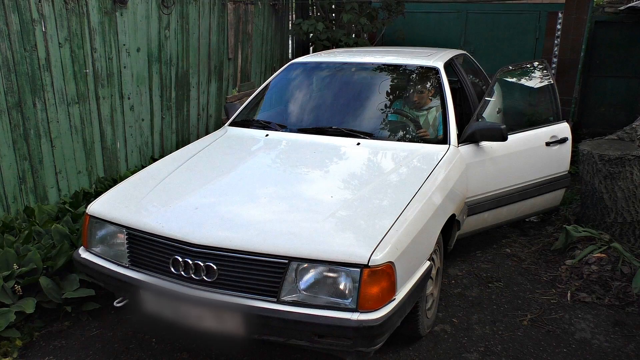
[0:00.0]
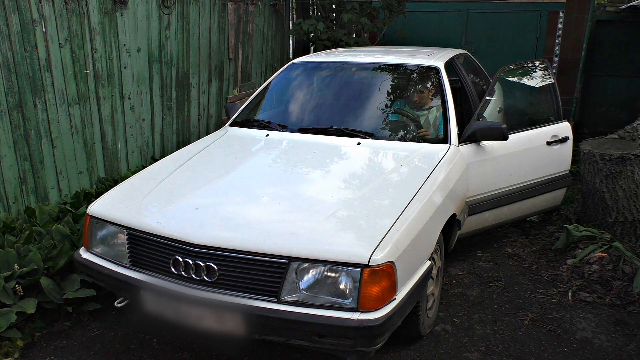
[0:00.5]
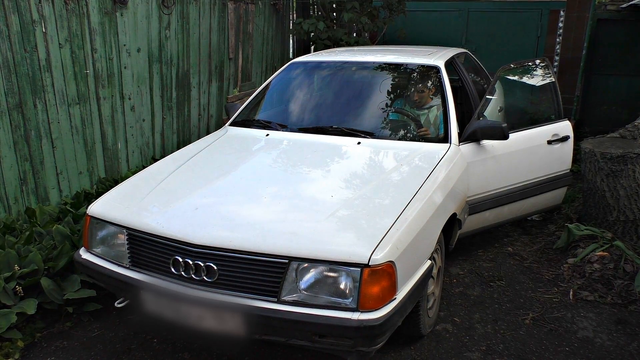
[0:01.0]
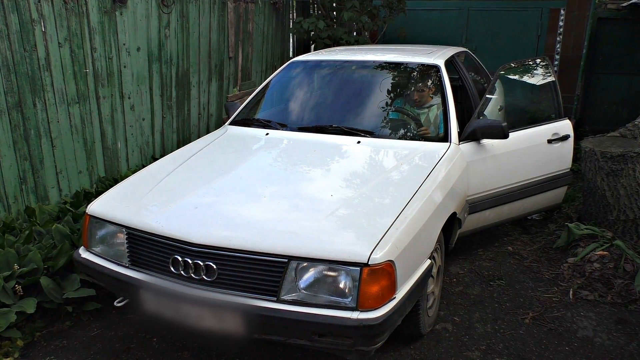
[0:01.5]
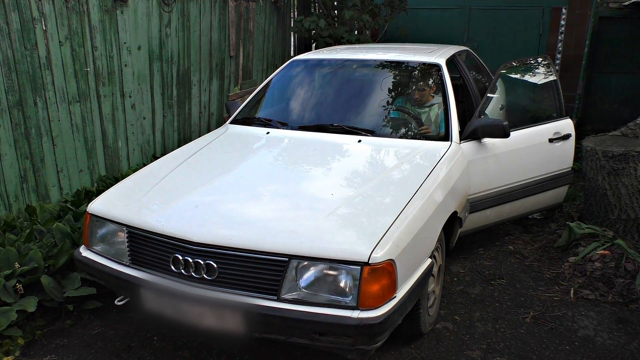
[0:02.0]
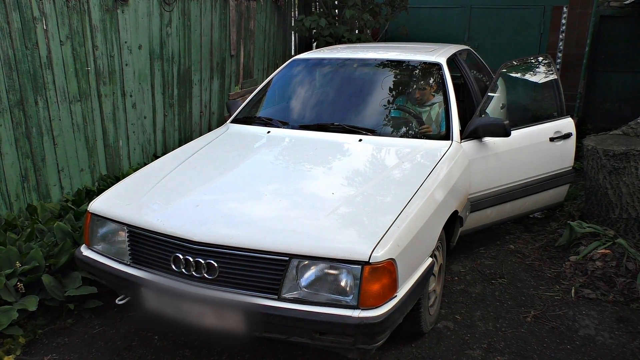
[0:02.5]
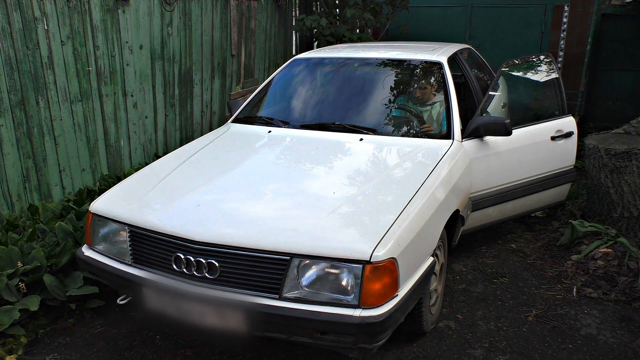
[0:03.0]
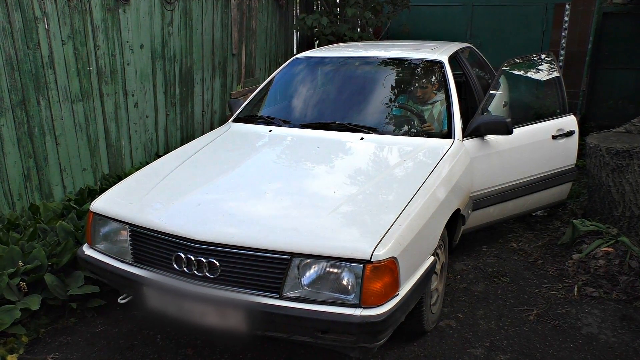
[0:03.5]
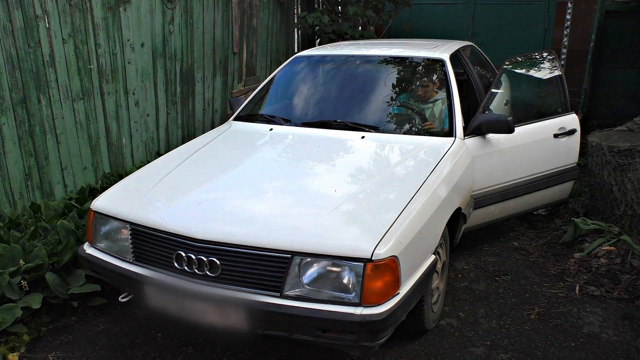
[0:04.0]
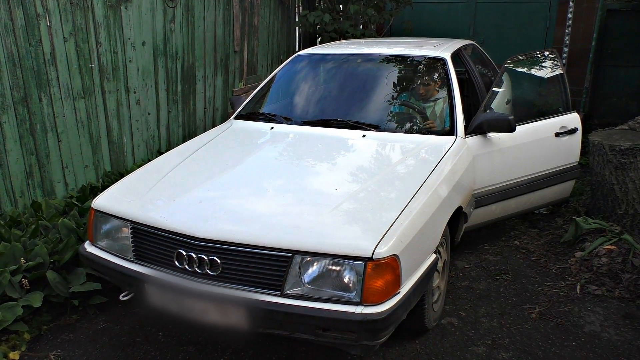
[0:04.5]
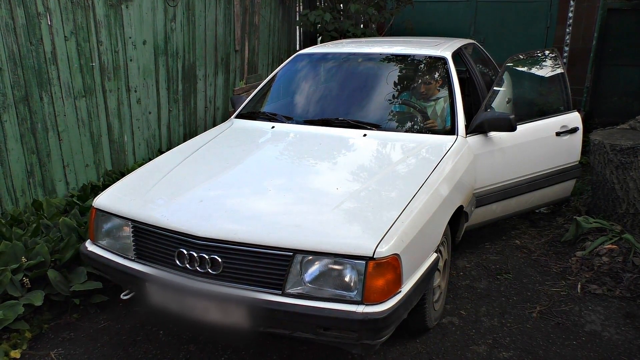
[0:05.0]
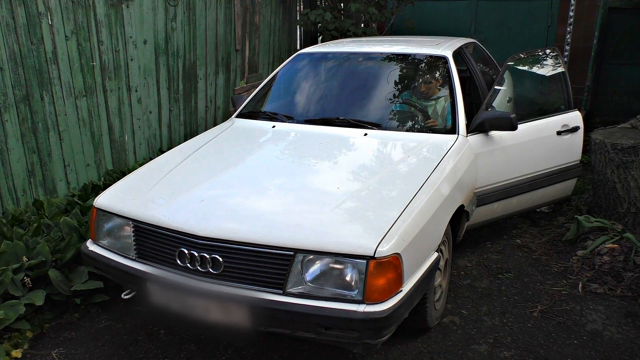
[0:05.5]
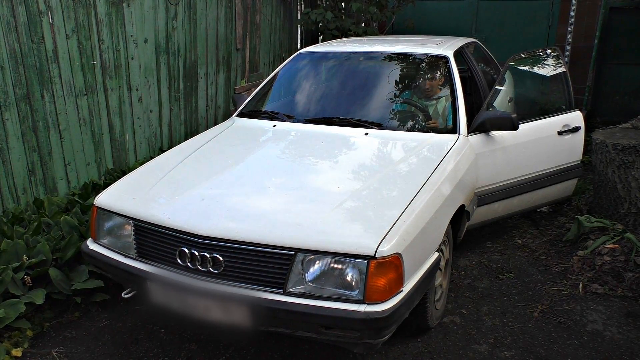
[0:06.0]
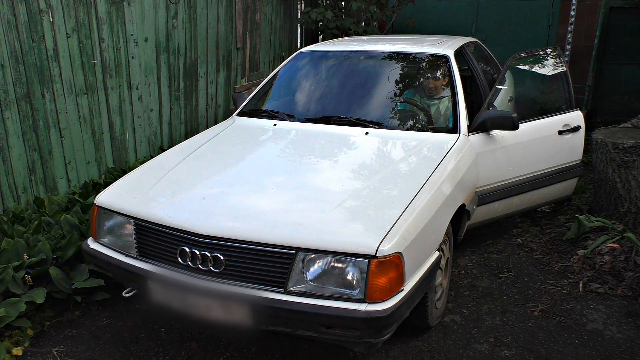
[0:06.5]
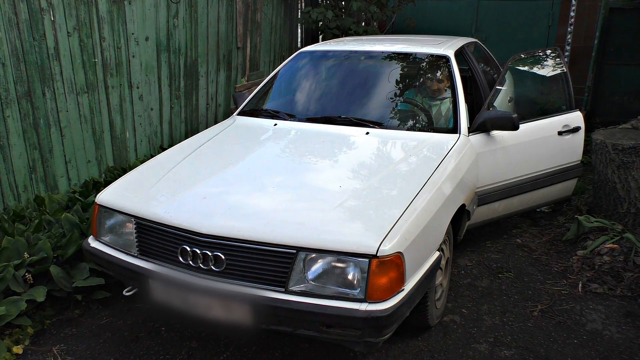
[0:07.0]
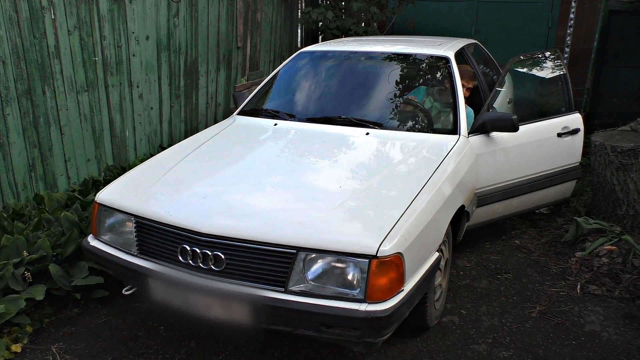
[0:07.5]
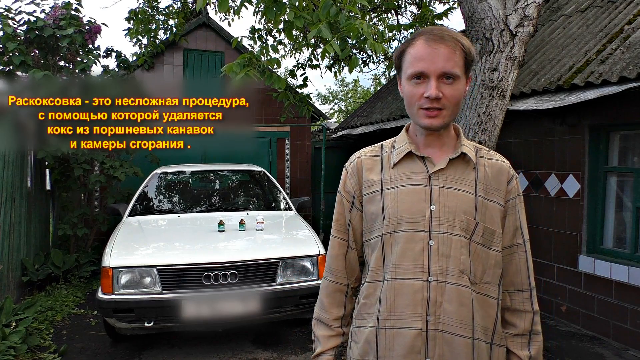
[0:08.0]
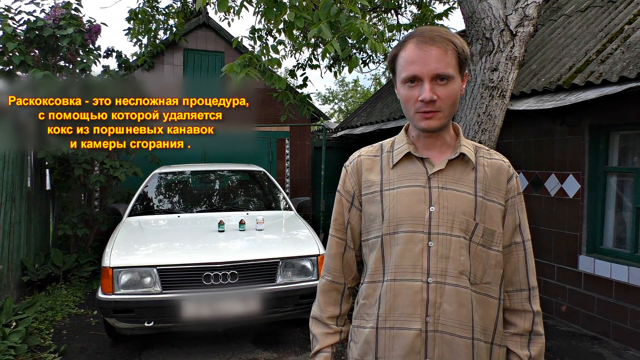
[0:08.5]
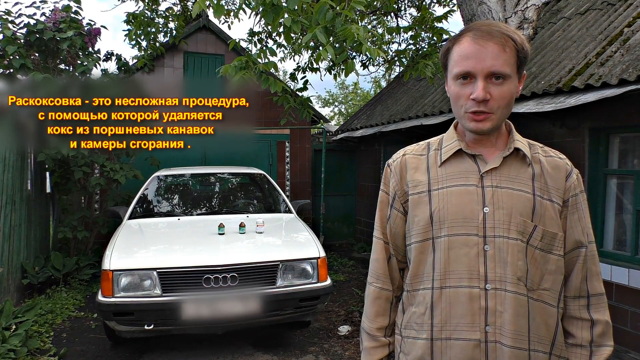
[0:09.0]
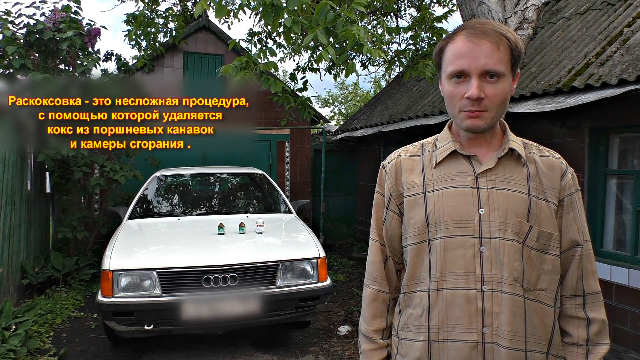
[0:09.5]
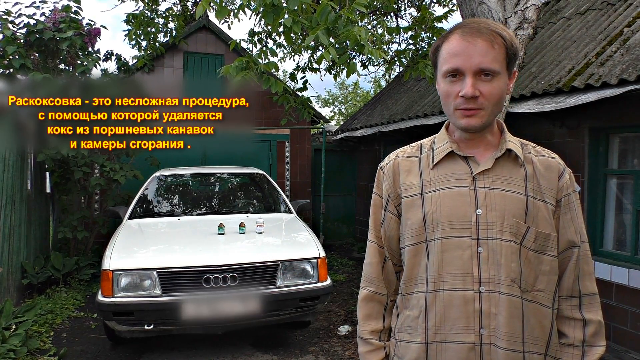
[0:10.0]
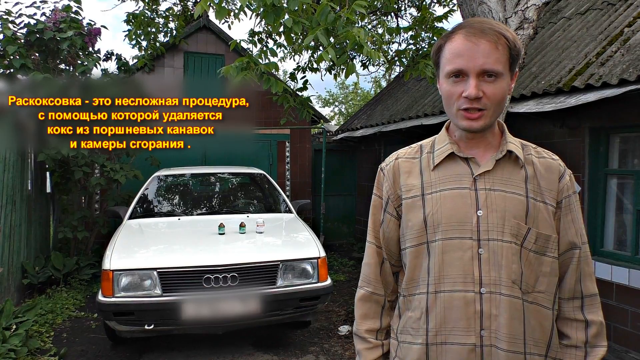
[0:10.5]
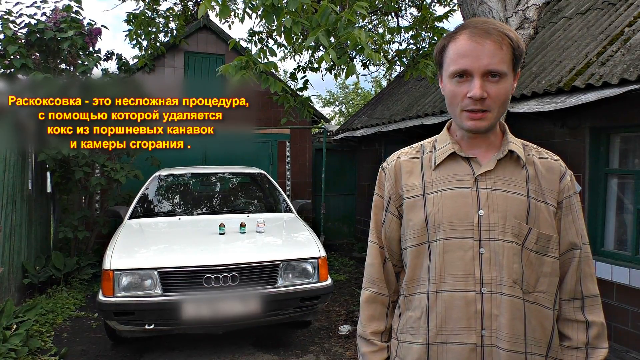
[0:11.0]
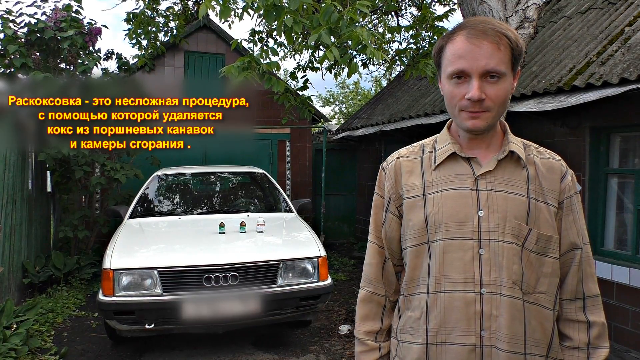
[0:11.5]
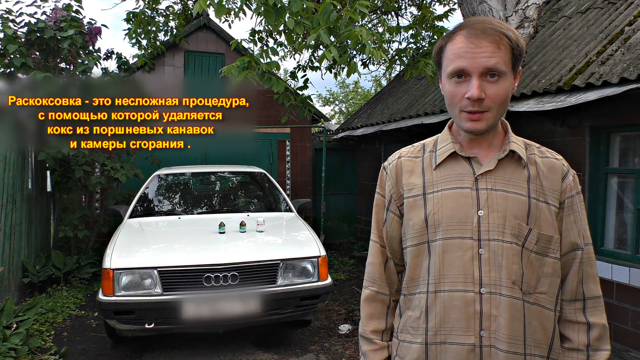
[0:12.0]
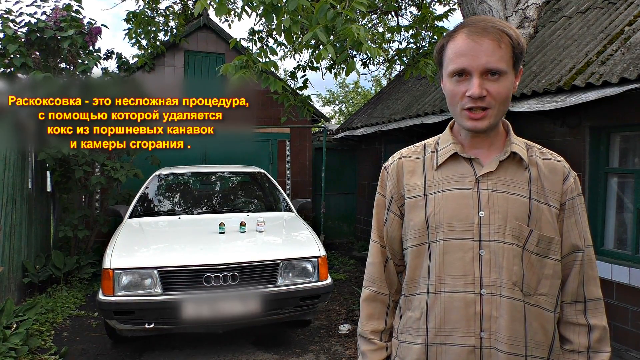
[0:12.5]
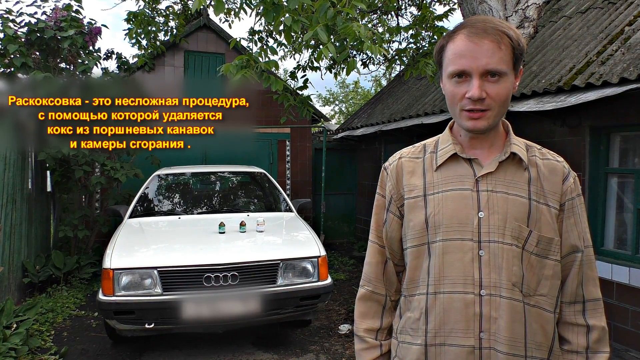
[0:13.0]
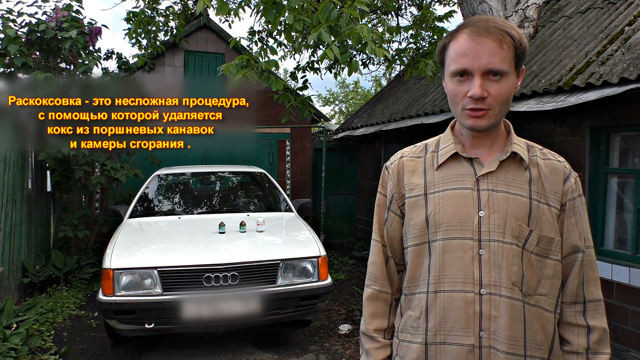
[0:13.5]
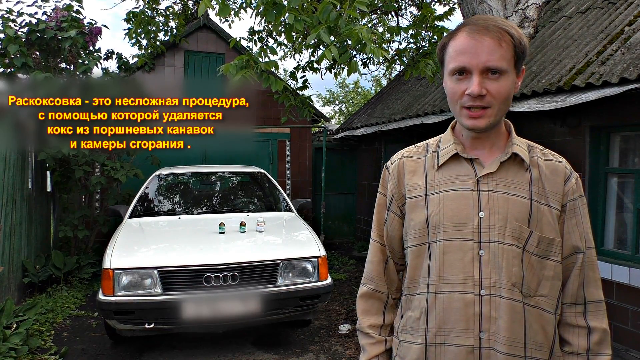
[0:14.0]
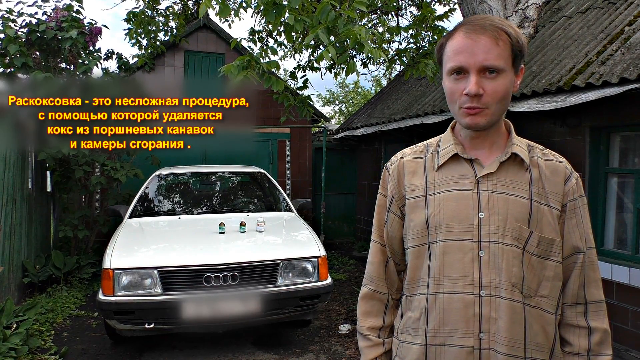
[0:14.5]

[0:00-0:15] The YouTube video's title cannot be read. A yellow caution triangle appears in the upper left-hand corner. A white car faces the camera with the driver's side door open and someone sitting in the driver's seat. The video then skips forward to a man in a tan shirt with black stripes talking to the camera. The text reads "today I'm going to show a simple and effective way to help you restore your engine to its former state." The white car is in the background, with three containers of something on its hood. As the man talks, he says "we'll pour some engine flush liquid in the running engine. It will thoroughly rinse the combustion chamber evaporating under high pressure."